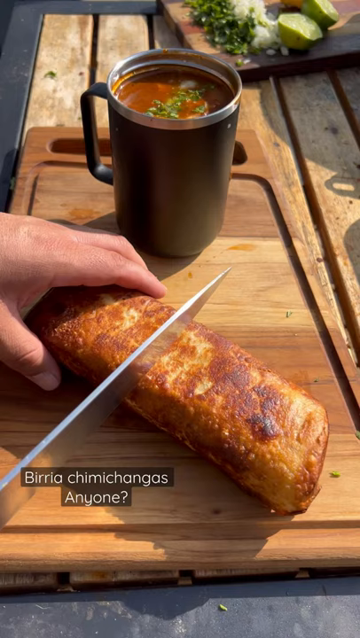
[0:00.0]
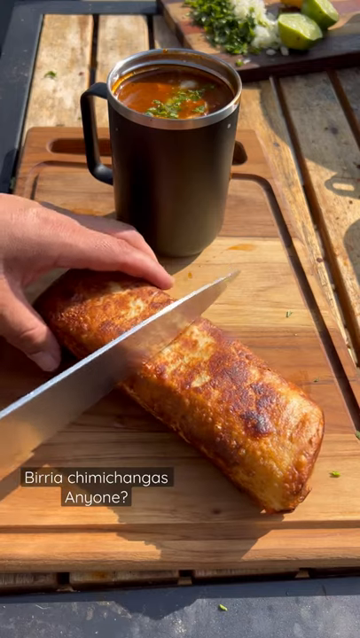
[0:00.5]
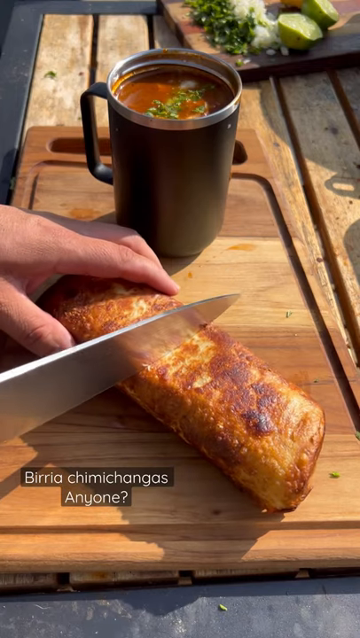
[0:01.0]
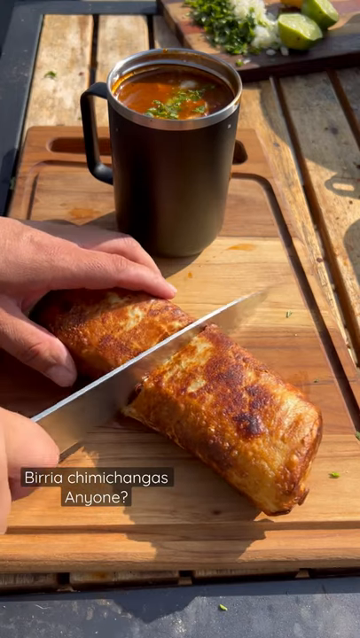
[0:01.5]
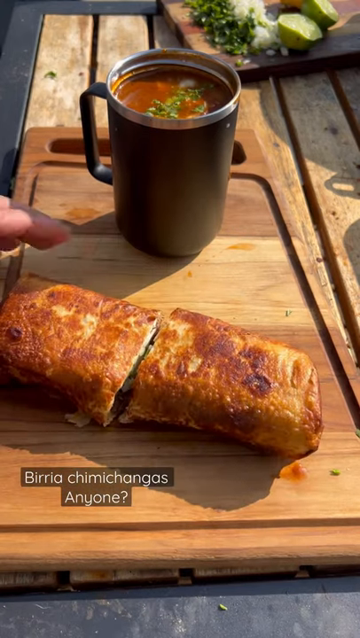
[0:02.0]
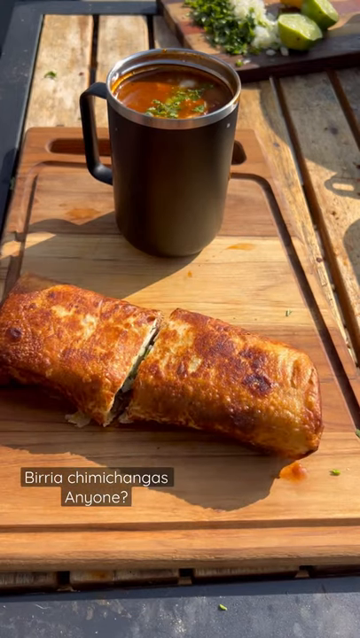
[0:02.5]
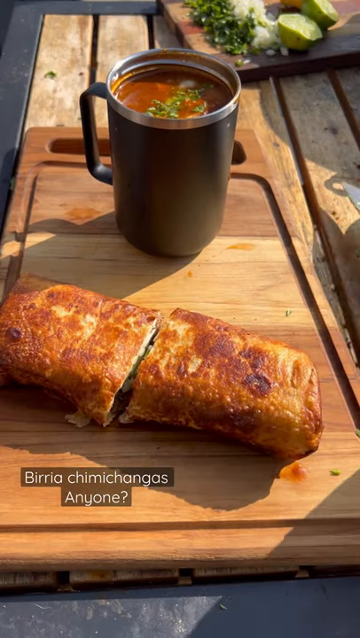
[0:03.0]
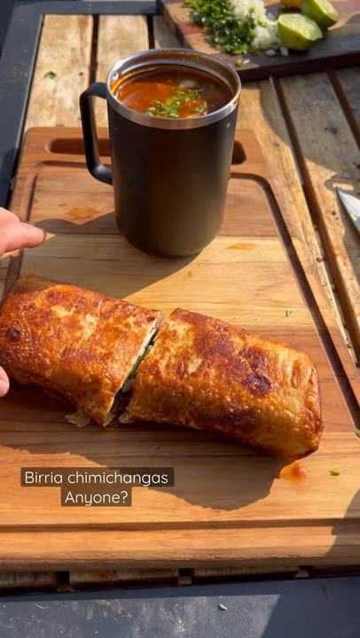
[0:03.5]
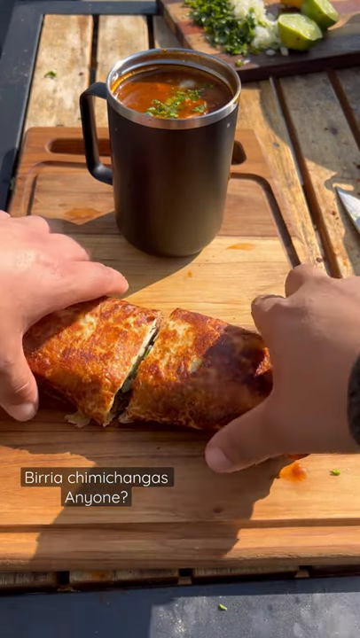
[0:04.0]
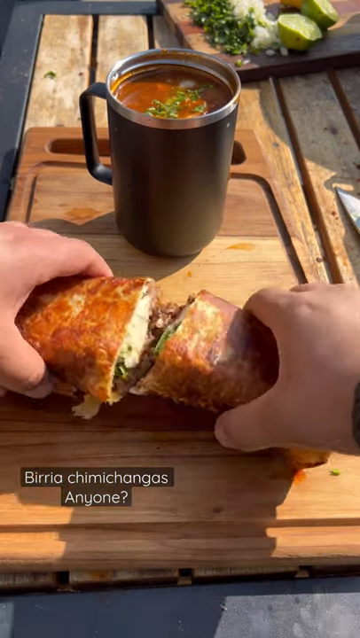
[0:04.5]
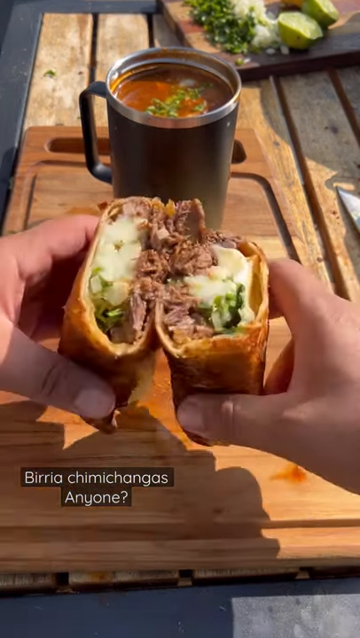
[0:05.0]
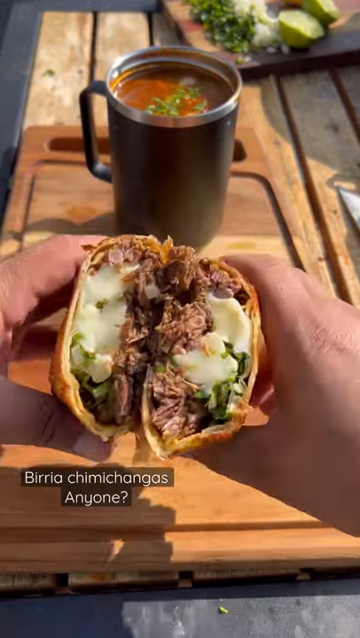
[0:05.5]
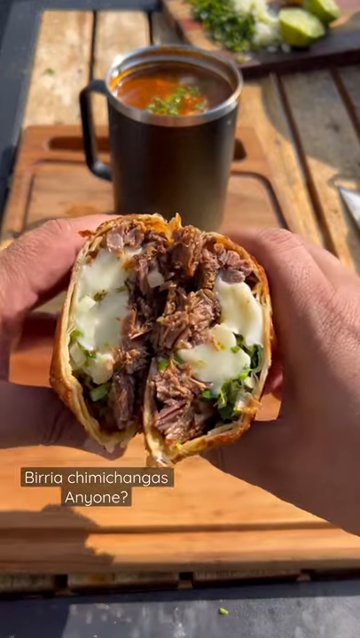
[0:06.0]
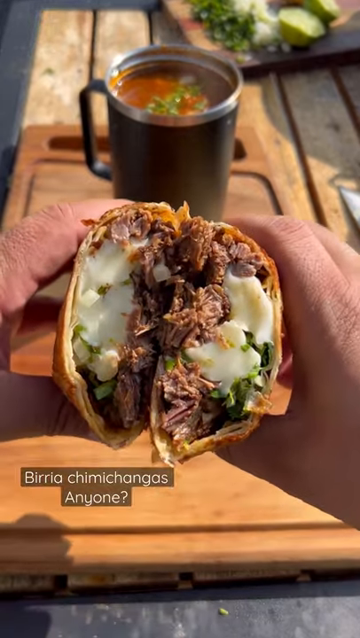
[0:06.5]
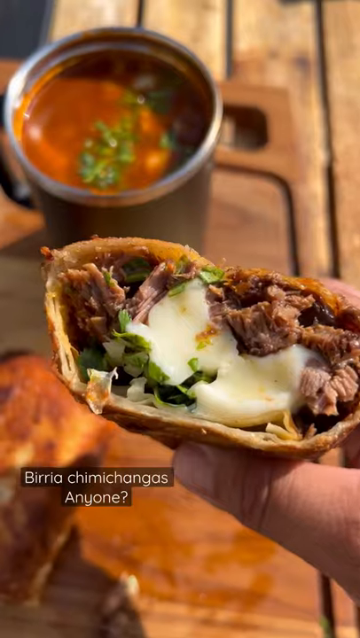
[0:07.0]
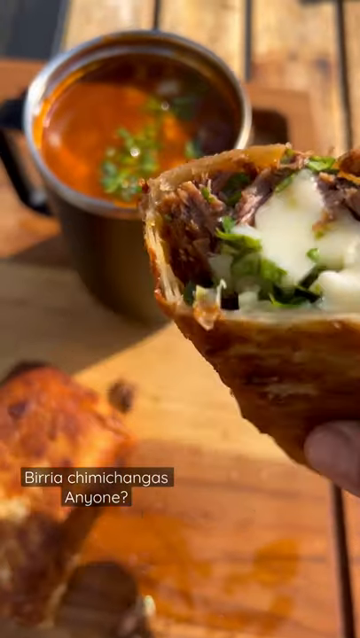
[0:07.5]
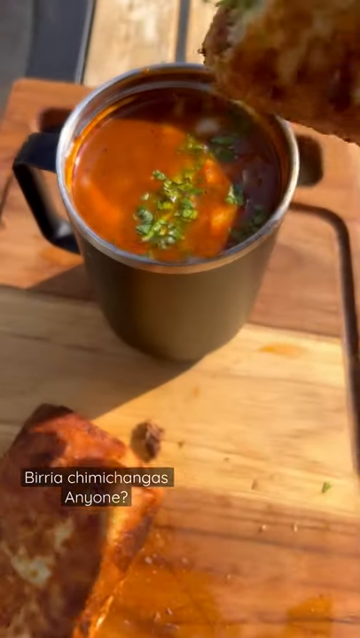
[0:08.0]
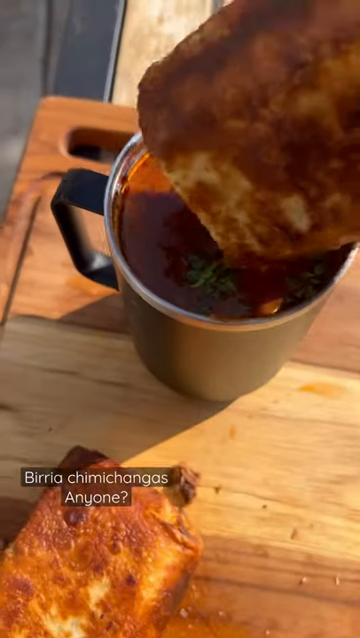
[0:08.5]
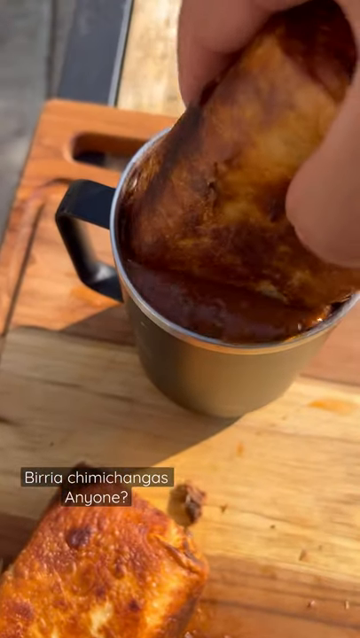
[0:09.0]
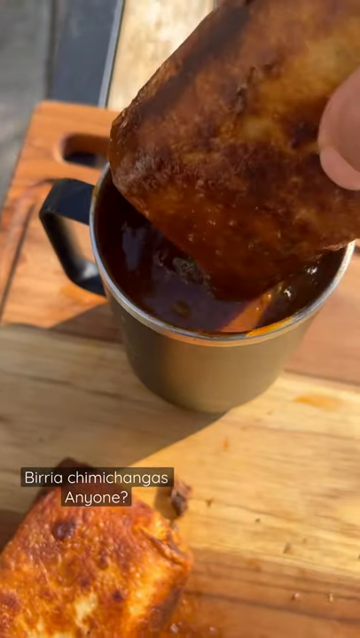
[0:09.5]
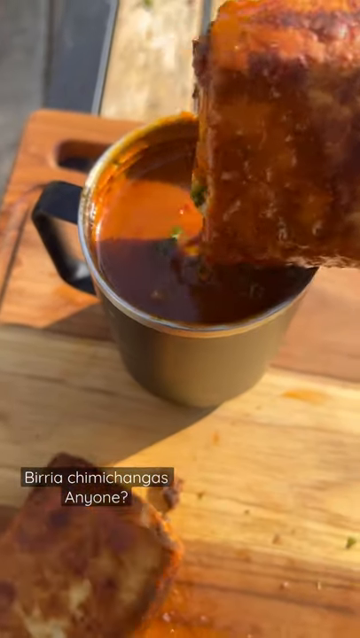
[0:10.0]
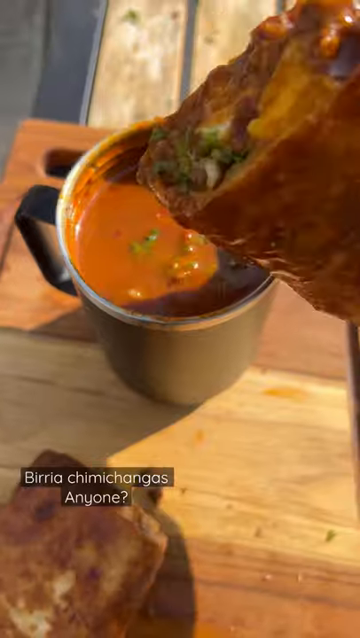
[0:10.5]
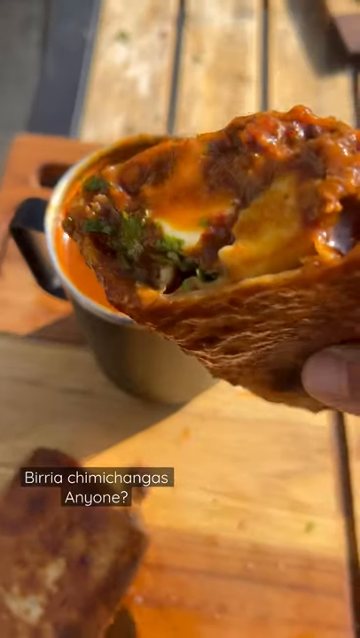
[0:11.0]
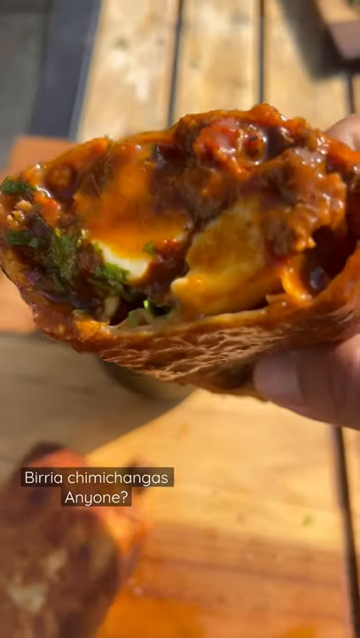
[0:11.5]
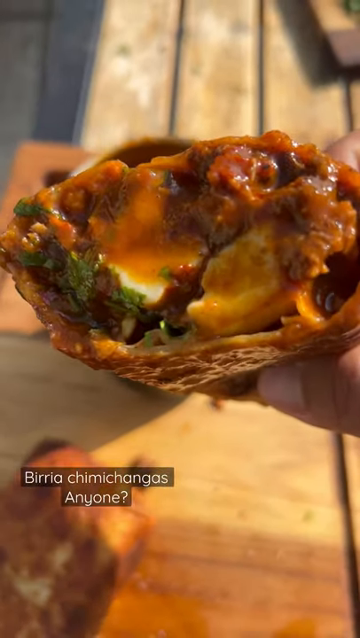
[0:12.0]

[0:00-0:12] The video opens on a cutting board holding what looks to be some kind of sandwich wrap, apparently about a foot long. Someone comes in, with only their hands visible, holding a knife, and cuts the wrap diagonally down the middle. They then pick up both pieces and hold them up toward the camera to show what is inside: what appears to be some kind of beef-type meat, some kind of white cheese, and some kind of green leafy material. Small lettering in the bottom left-hand side of the video reads "Beera chimichangas anyone?" Sitting toward the top of the cutting board is a black stainless steel mug containing red sauce or red soup, with maybe some chives sprinkled on top. After showing the insides of the two halves, the person dips one half into the soup and shows it again to the camera, now coated with the red sauce or red soup.